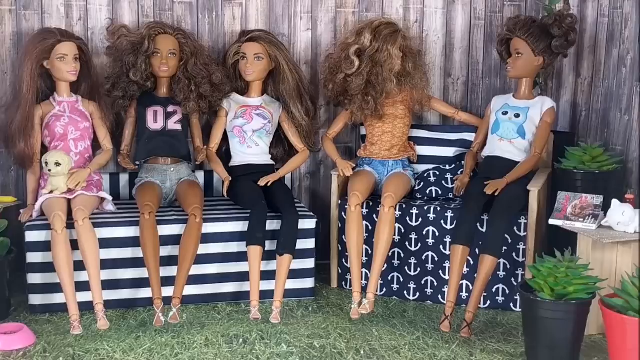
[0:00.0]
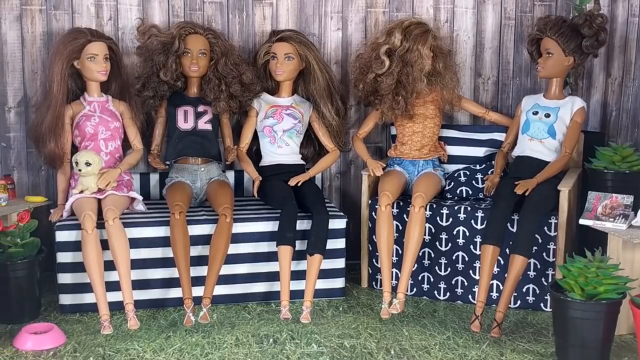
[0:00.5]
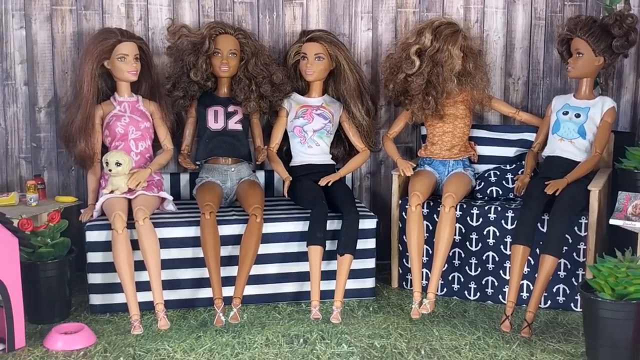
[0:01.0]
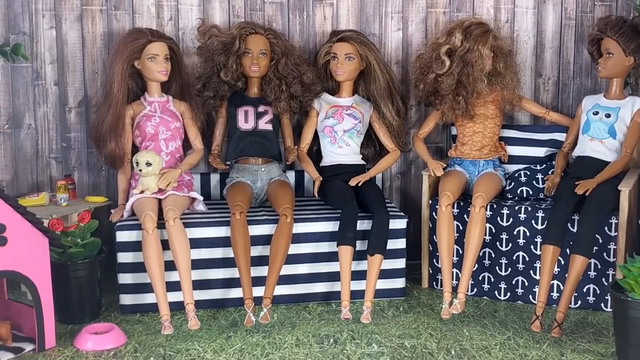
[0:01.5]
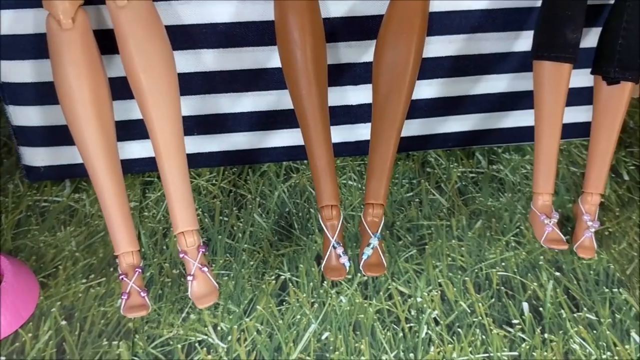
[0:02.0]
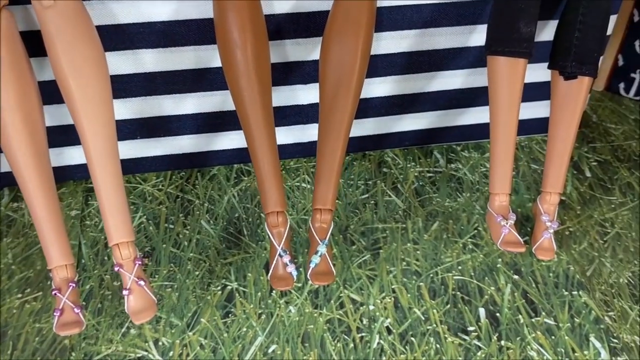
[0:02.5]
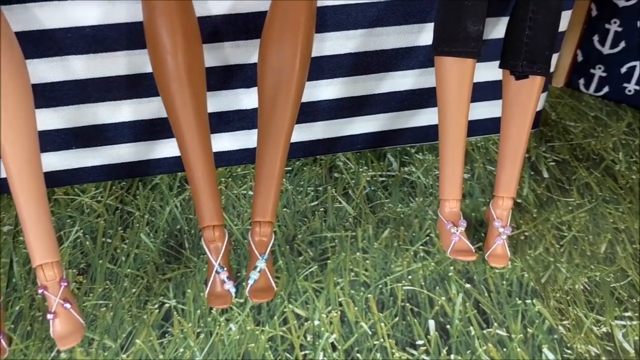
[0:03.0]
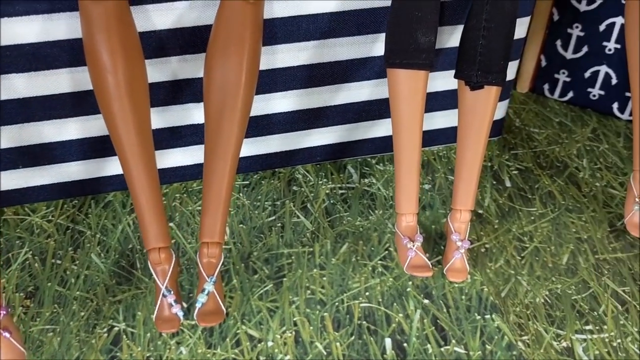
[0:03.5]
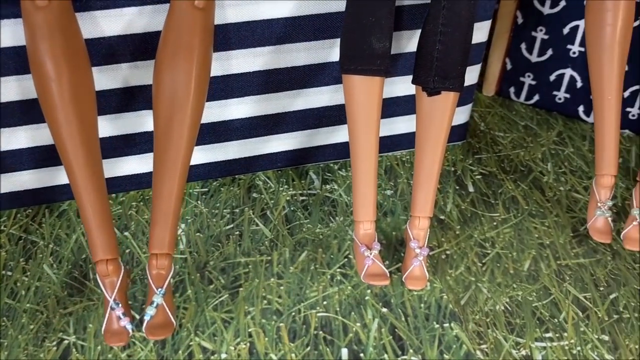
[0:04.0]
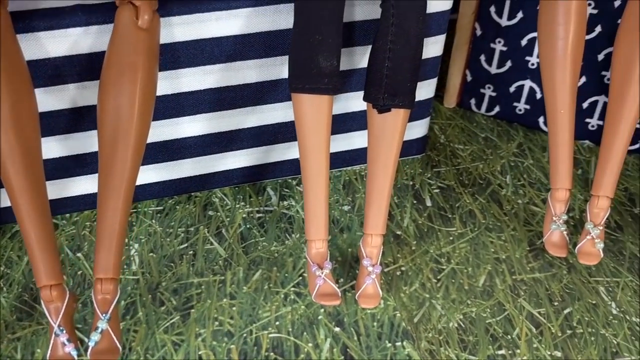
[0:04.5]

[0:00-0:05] The video is titled DIY Miniature Barbie Sandals. Apparently about 5 or 6 different Barbies are displayed outside as if at a barbecue, sitting on a white and black bench with blankets, in what looks like a recreated miniature scene. The camera keeps focusing on the Barbies' sandals, feet and legs. The Barbies are of different races: a couple of black Barbies, a couple of white Barbies, and one that looks mixed race. There also appears to be a dog house with a dog bowl, both pink. It looks like a miniature display of the Barbies enjoying a barbecue outside.